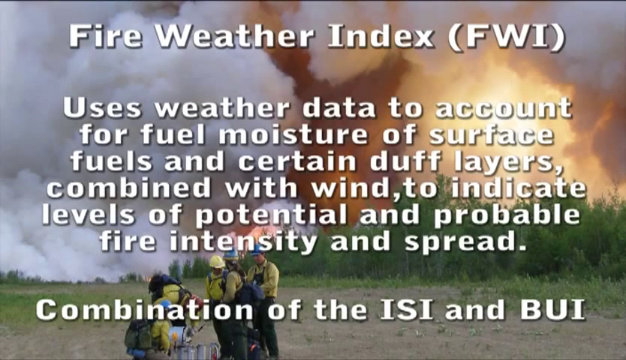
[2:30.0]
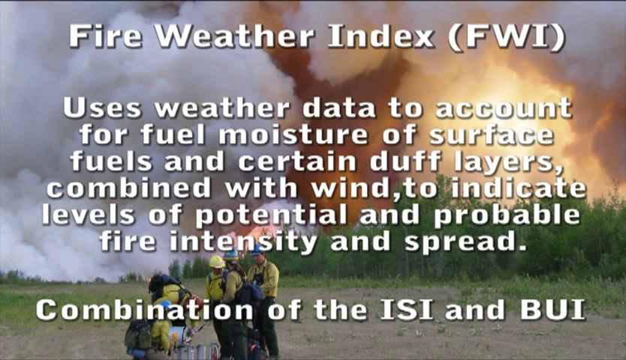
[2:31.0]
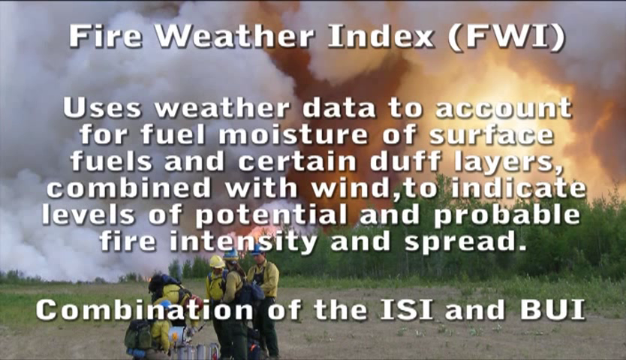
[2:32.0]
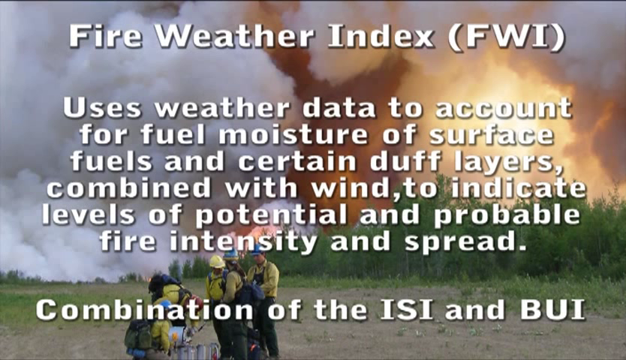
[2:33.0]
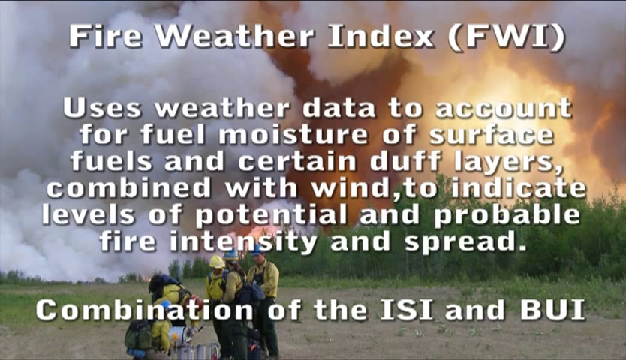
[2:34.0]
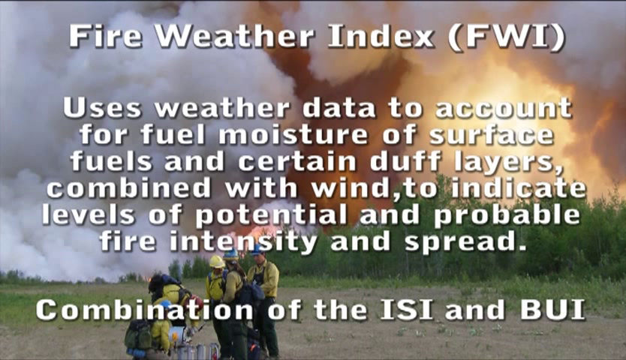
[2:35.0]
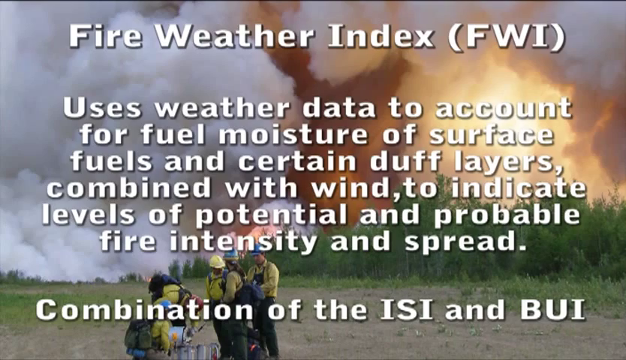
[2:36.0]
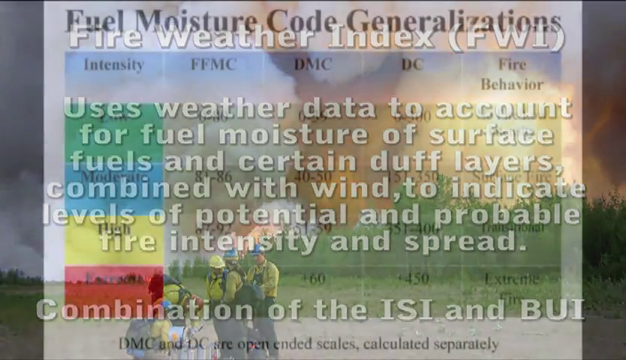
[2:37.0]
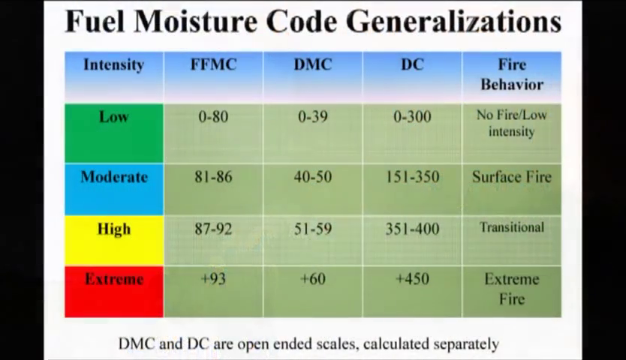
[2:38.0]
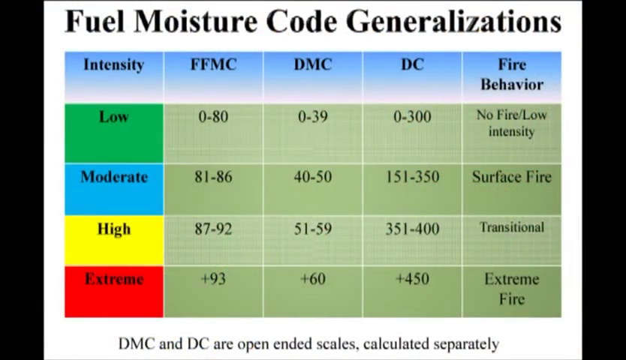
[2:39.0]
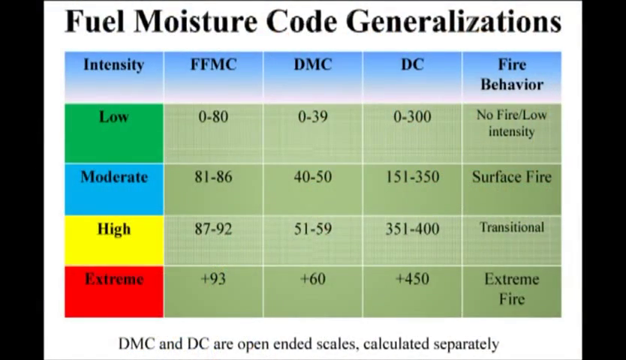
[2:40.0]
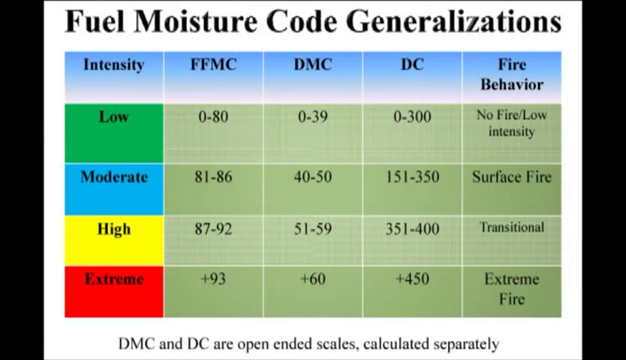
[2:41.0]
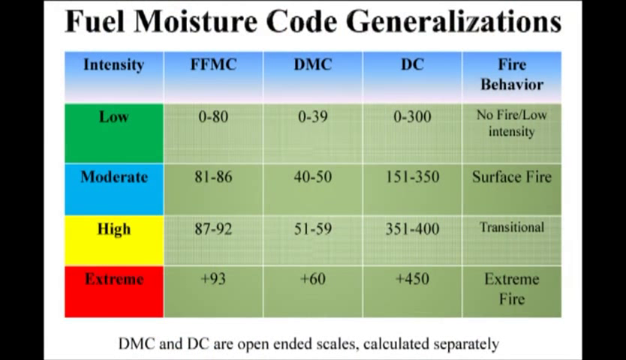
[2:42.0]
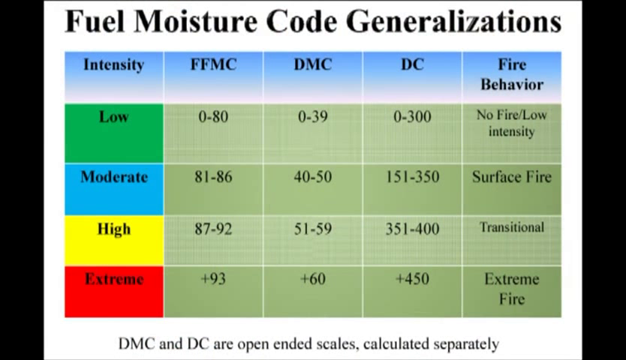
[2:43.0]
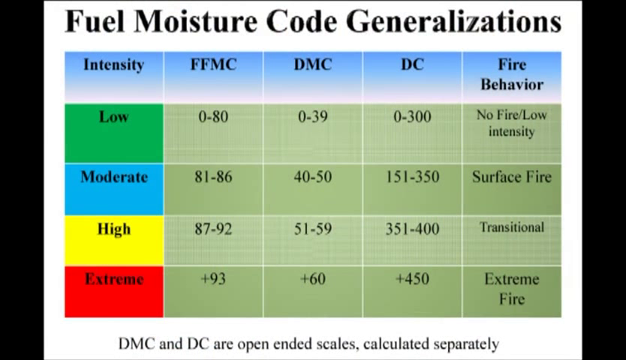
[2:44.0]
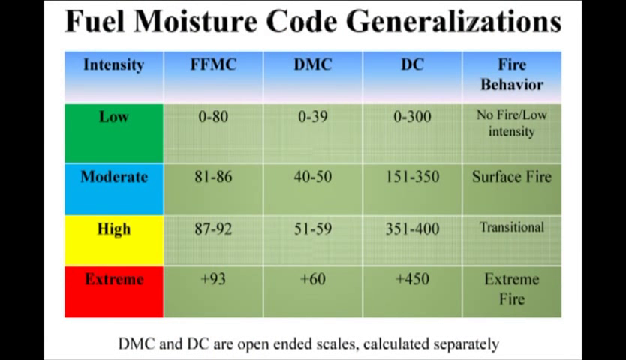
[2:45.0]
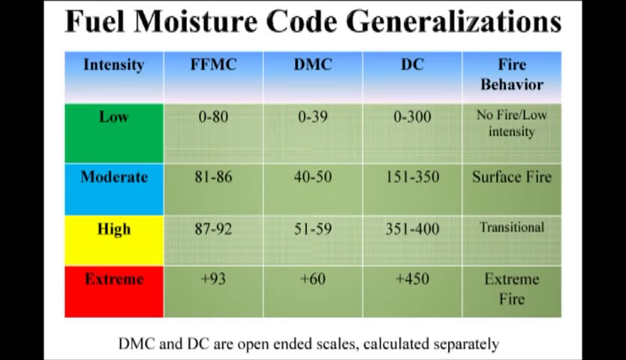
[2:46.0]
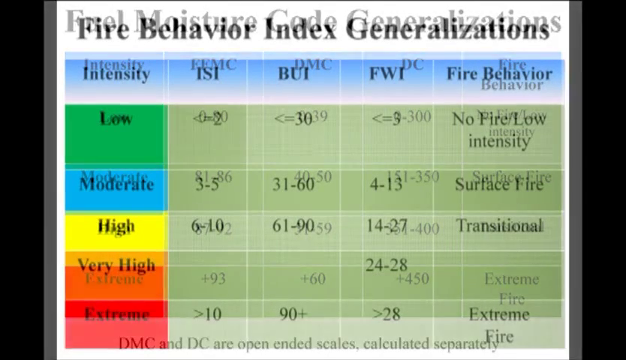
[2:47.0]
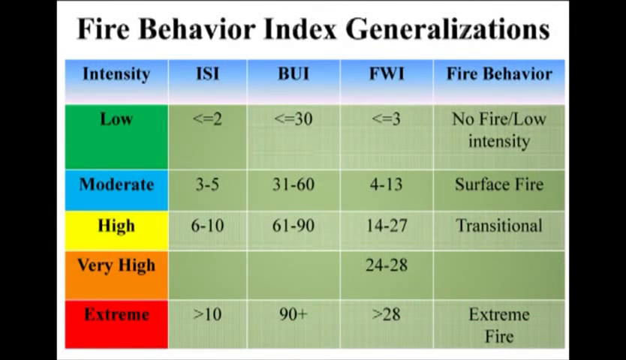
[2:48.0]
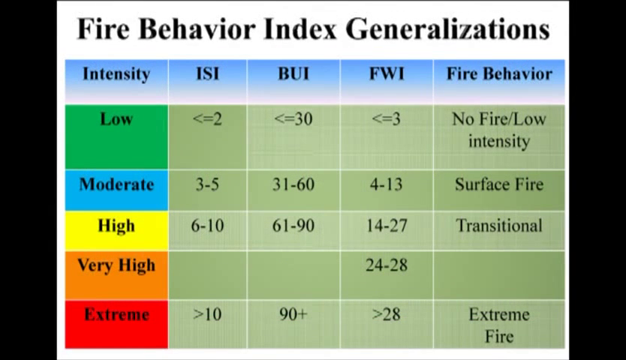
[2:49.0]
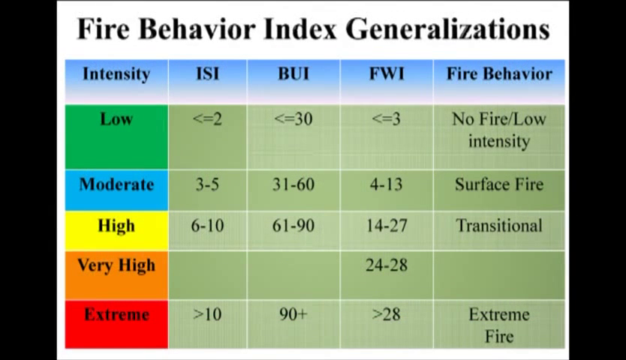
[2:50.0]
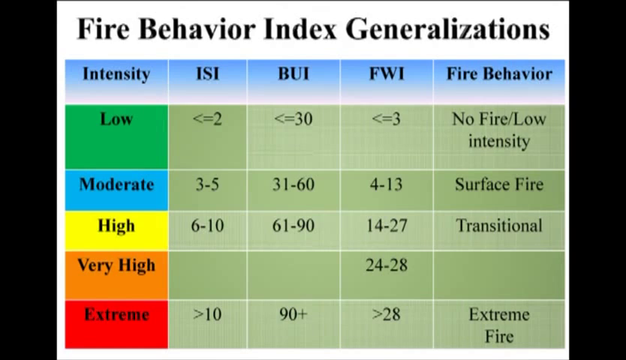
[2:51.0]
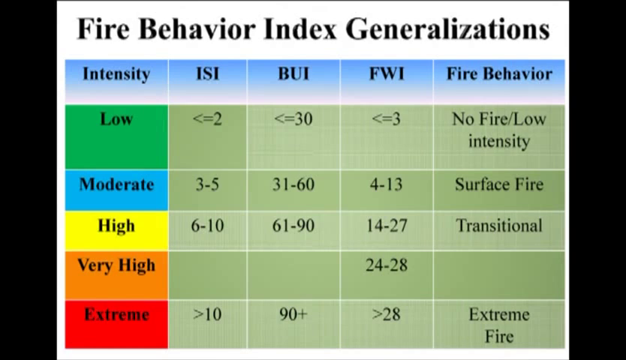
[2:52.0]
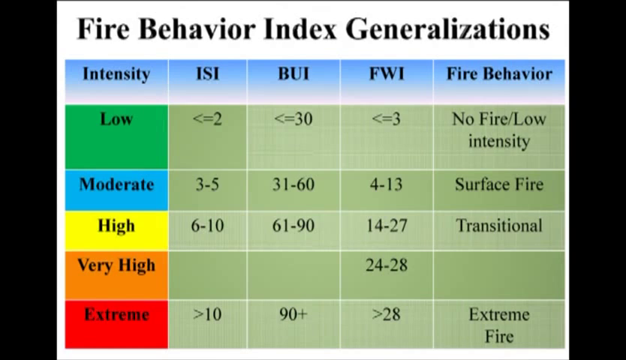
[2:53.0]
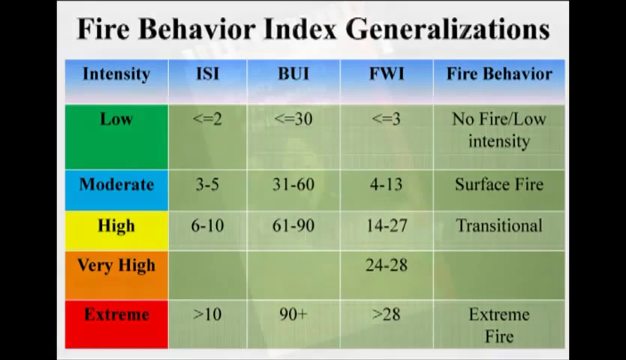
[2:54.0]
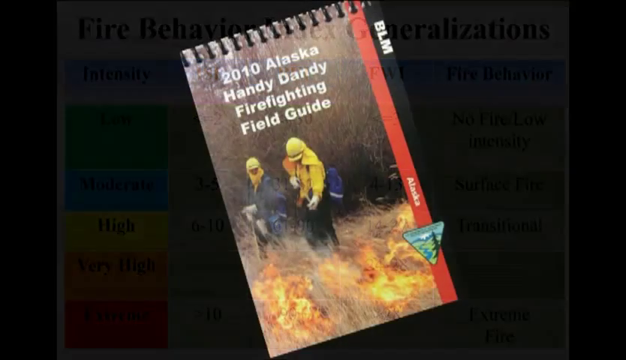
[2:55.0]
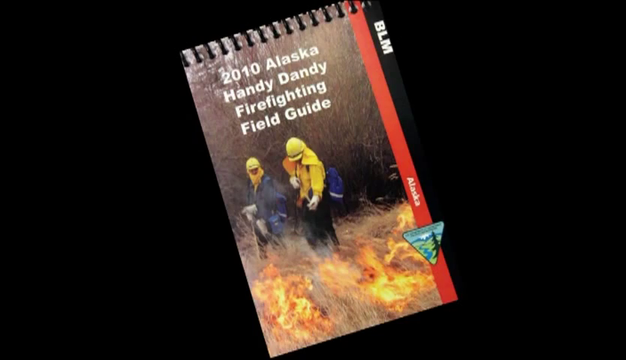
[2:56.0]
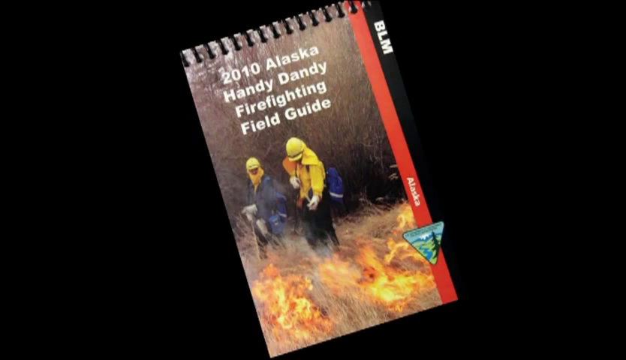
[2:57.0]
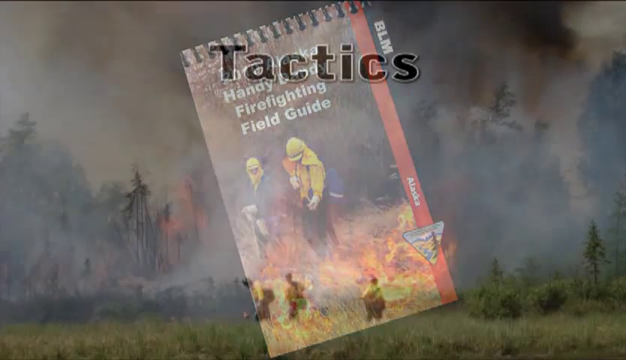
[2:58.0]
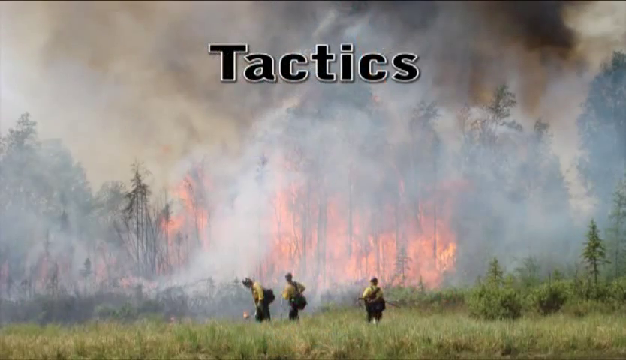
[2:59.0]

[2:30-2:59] A picture carries white letters that read, from the top down, "fire weather index (FWI)," then "uses weather data to account for fuel moisture of surface fuels in certain duff layers, combined with wind to indicate levels of potential and probable fire intensity and spread," and then "combination of the ISI and BUI." The scene moves to a fuel moisture code generalizations chart. Its top row reads "intensity," "FFMC," "DMC" and "DC," with "fire behavior" underneath. Under intensity are four levels: low in green, moderate in blue, high in yellow and extreme in red.